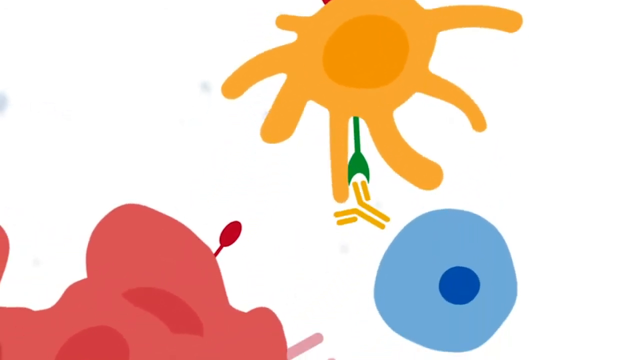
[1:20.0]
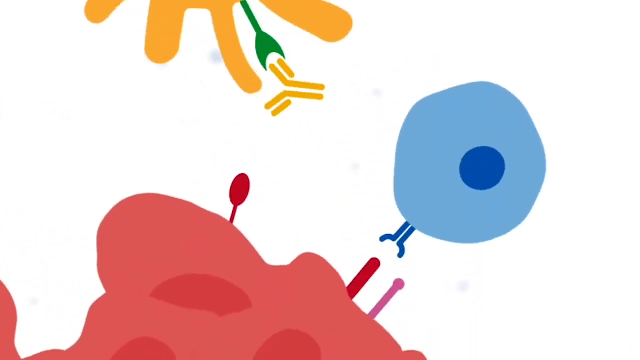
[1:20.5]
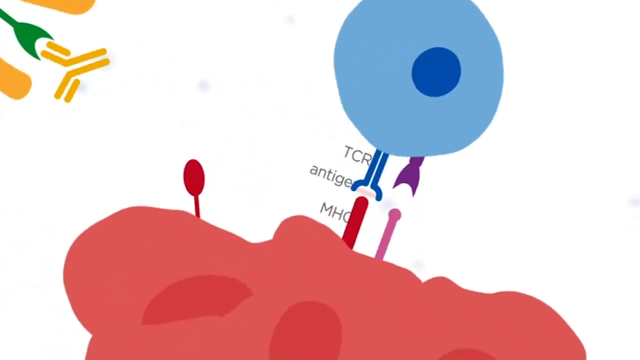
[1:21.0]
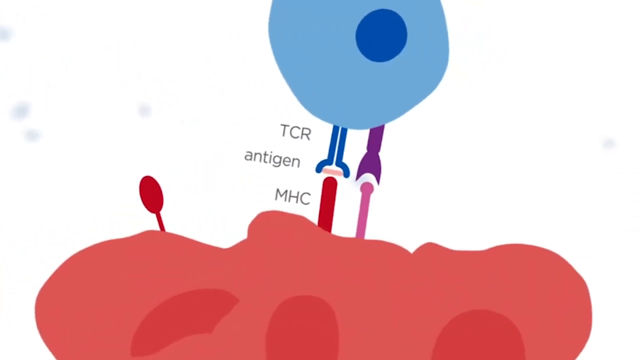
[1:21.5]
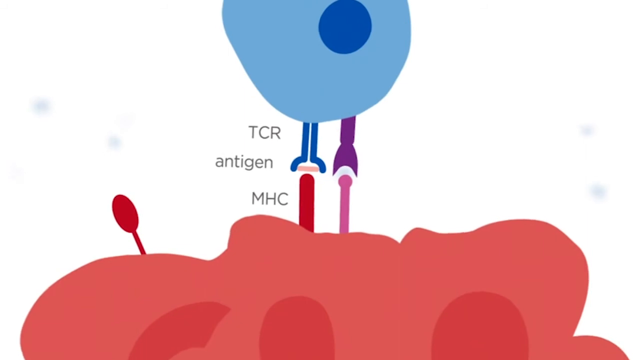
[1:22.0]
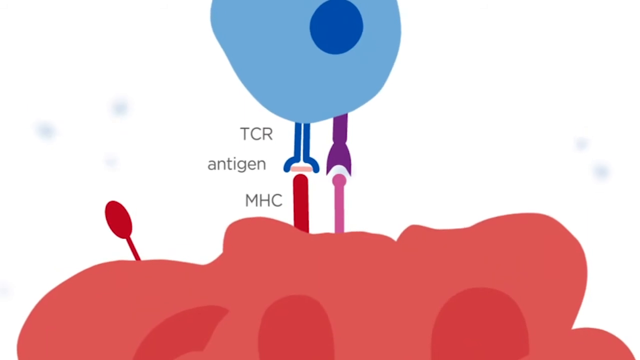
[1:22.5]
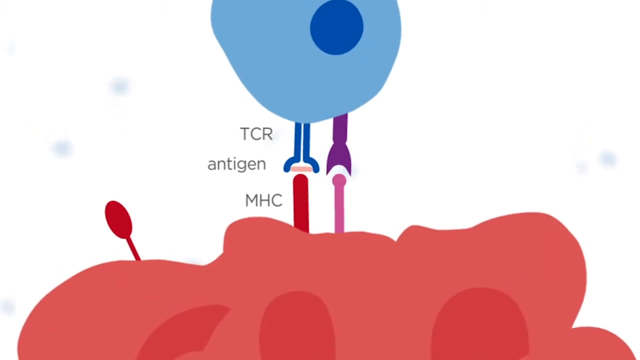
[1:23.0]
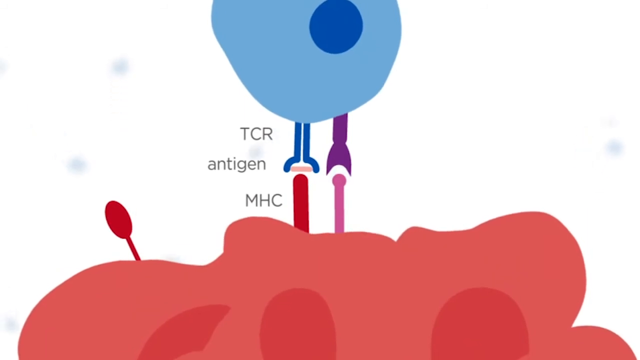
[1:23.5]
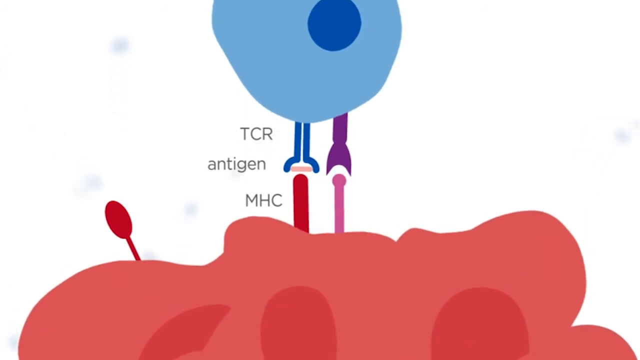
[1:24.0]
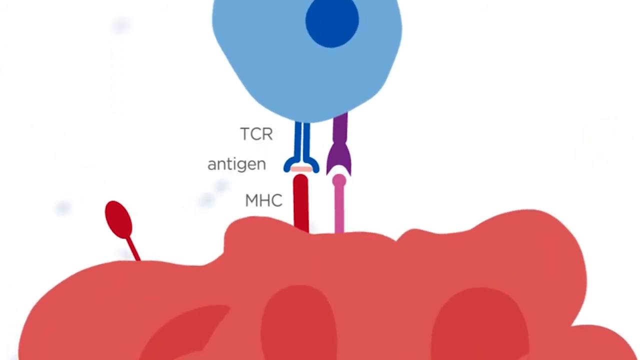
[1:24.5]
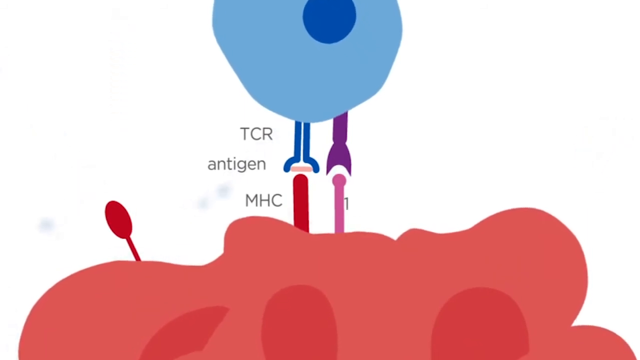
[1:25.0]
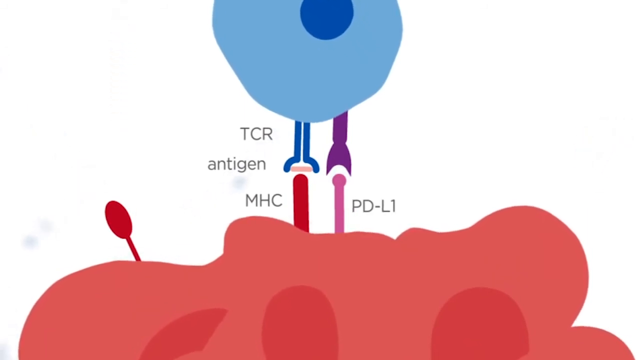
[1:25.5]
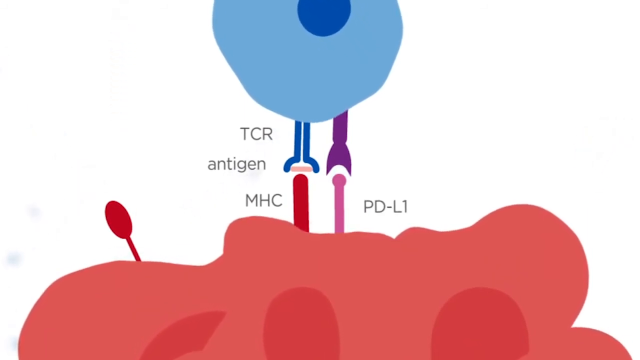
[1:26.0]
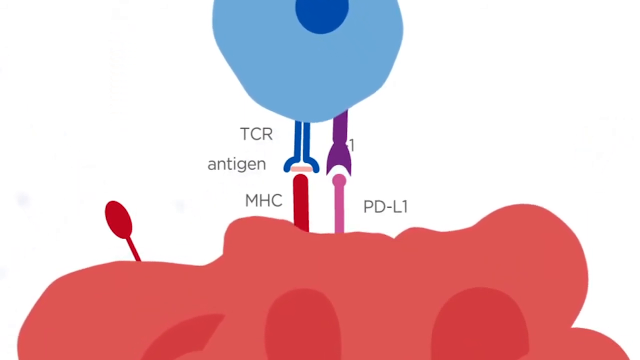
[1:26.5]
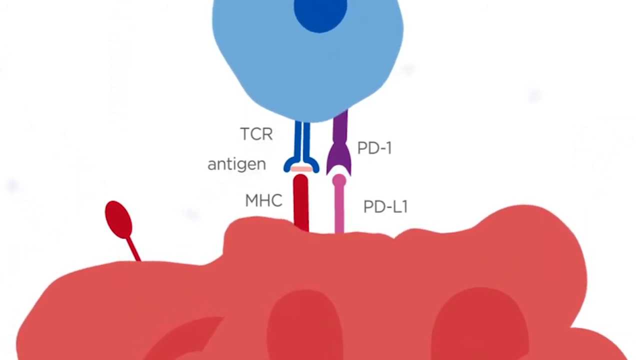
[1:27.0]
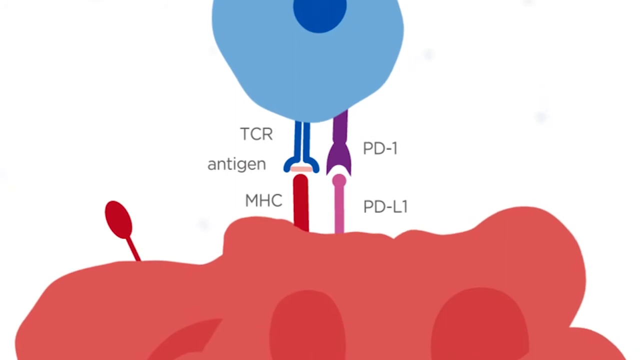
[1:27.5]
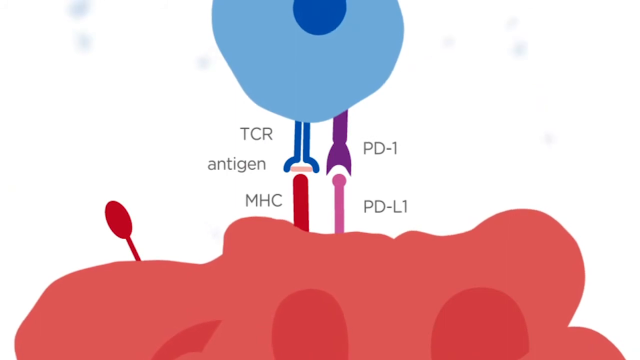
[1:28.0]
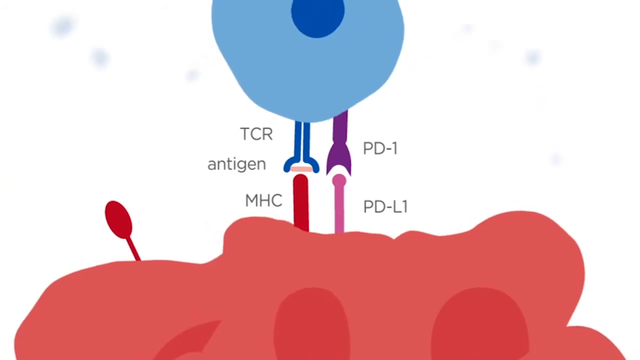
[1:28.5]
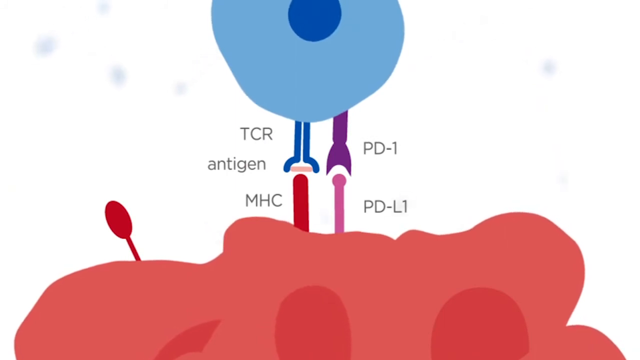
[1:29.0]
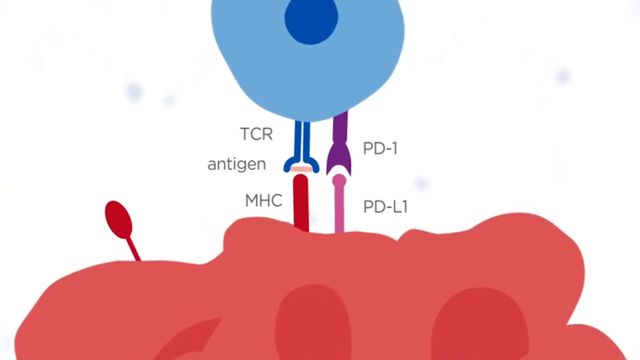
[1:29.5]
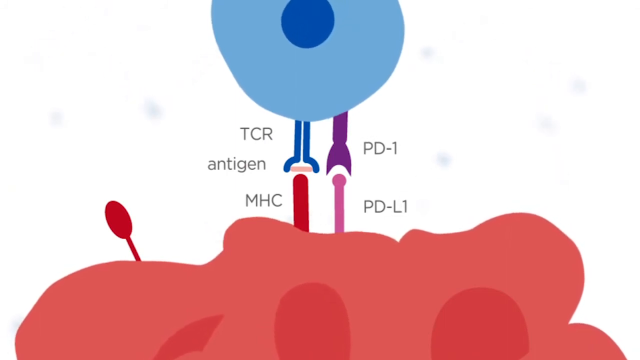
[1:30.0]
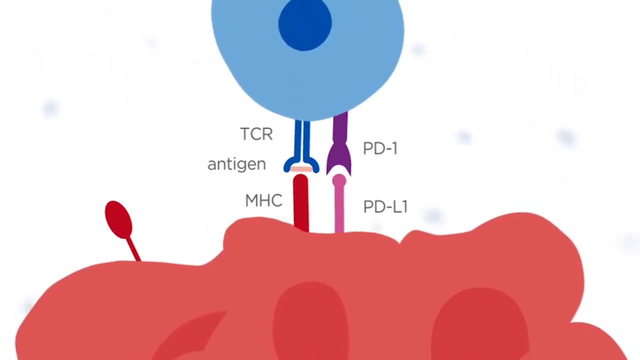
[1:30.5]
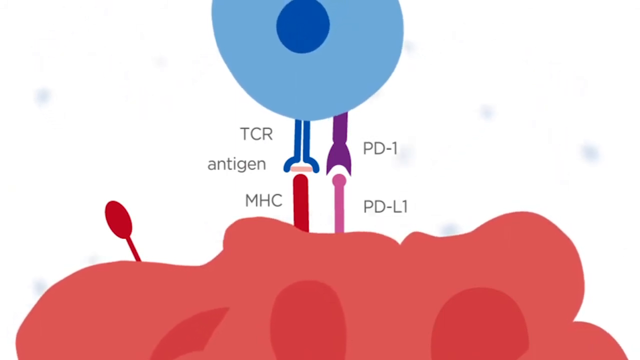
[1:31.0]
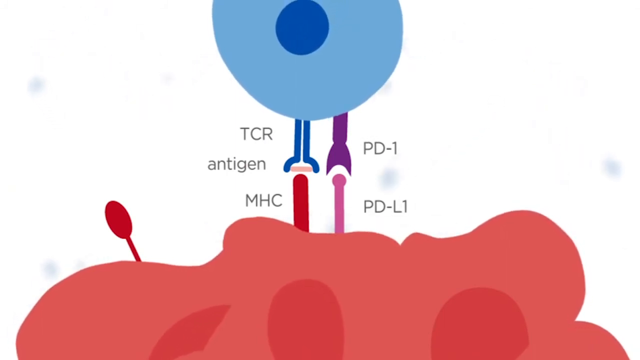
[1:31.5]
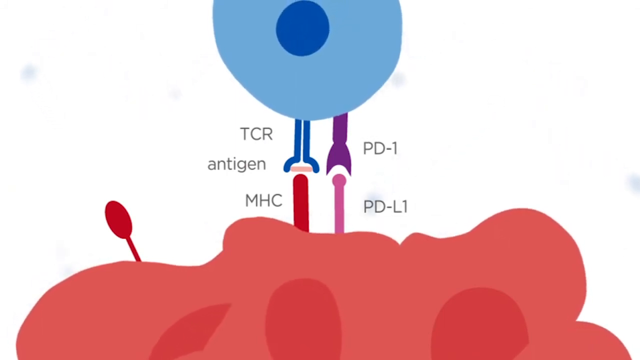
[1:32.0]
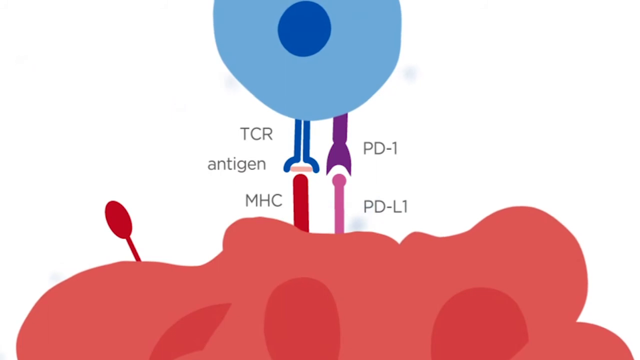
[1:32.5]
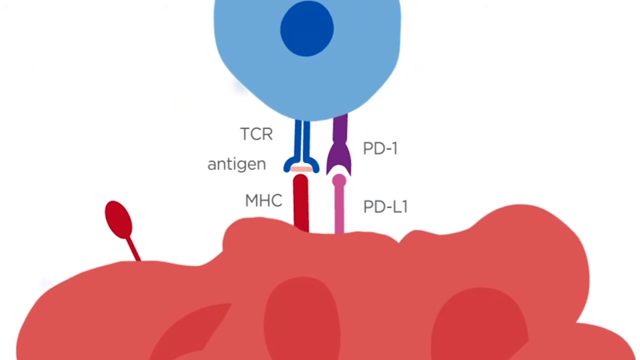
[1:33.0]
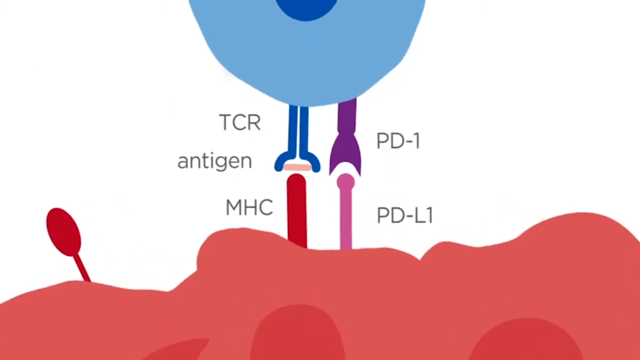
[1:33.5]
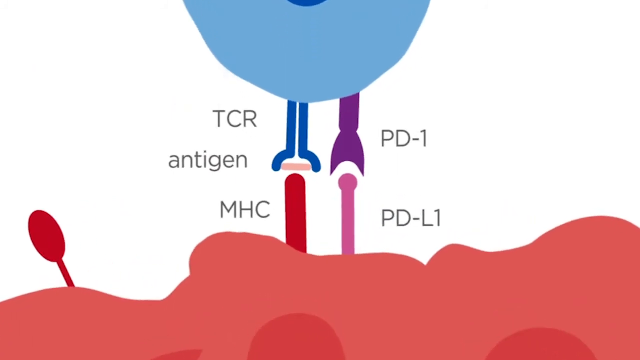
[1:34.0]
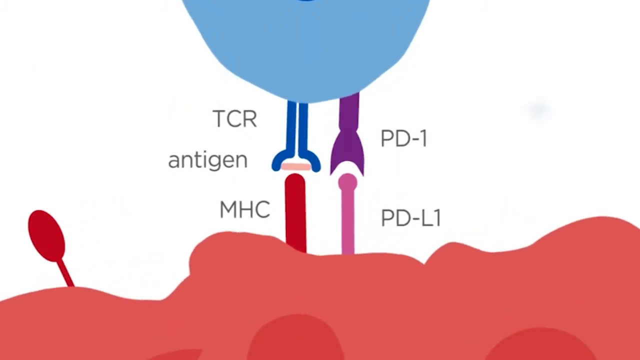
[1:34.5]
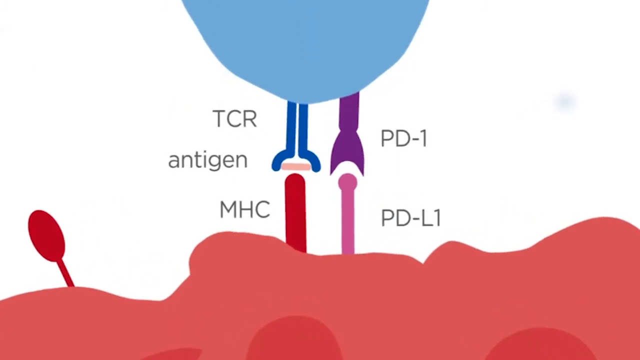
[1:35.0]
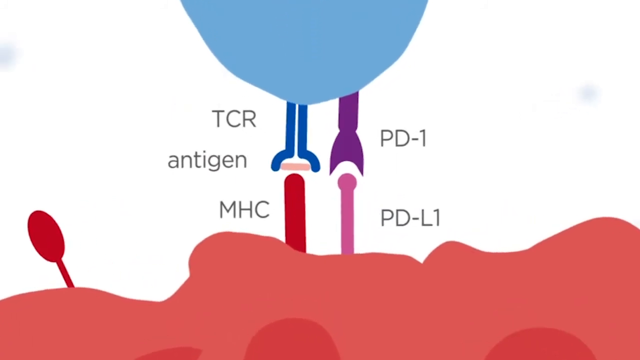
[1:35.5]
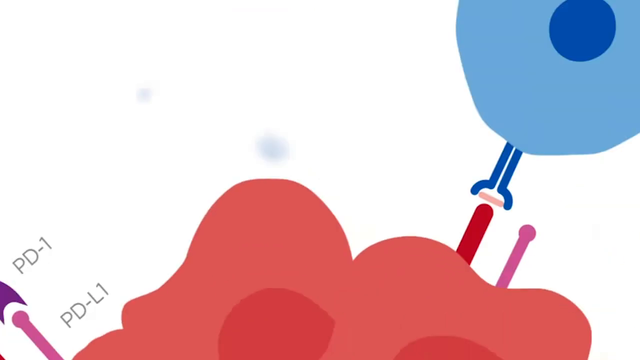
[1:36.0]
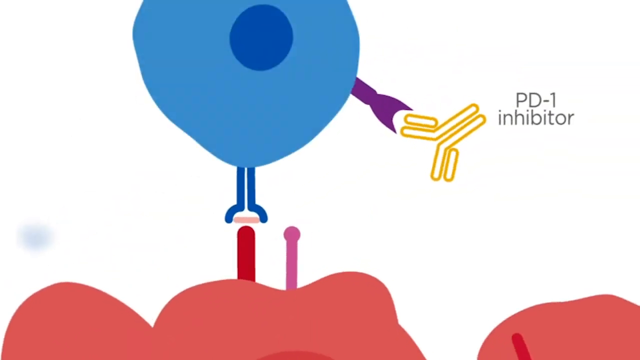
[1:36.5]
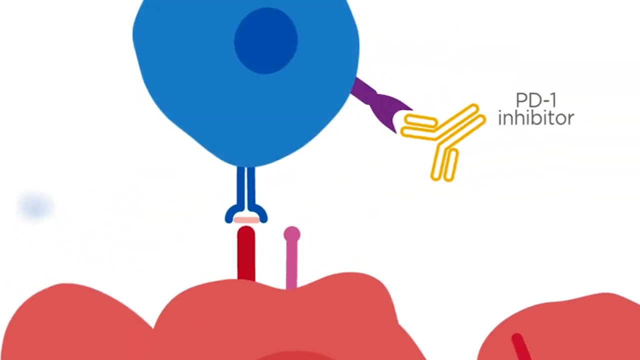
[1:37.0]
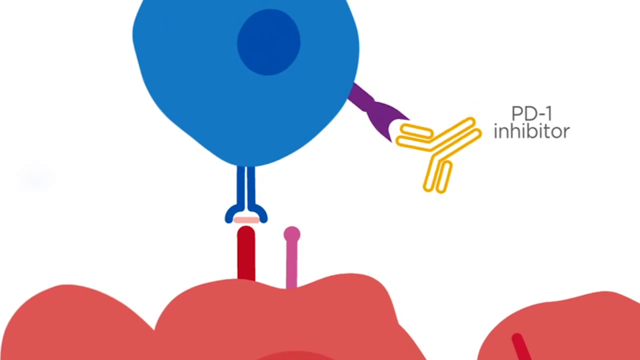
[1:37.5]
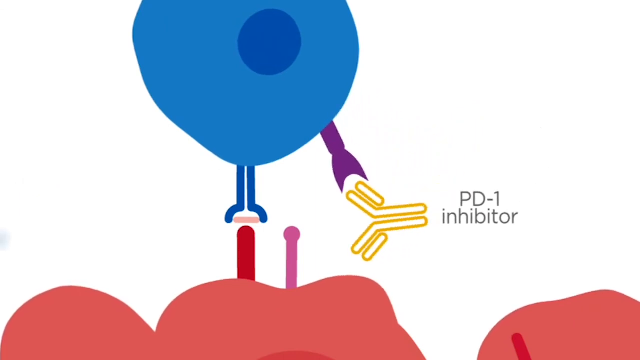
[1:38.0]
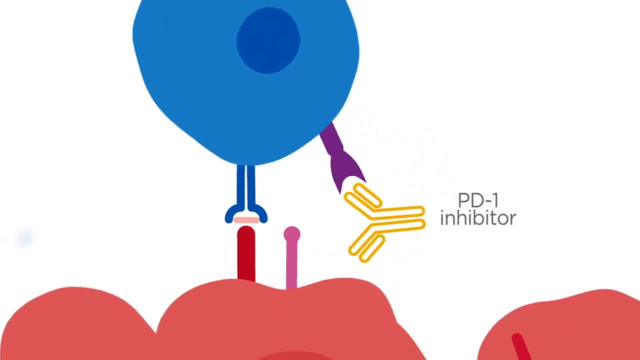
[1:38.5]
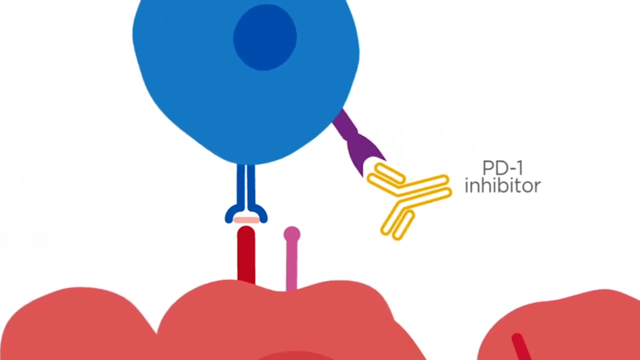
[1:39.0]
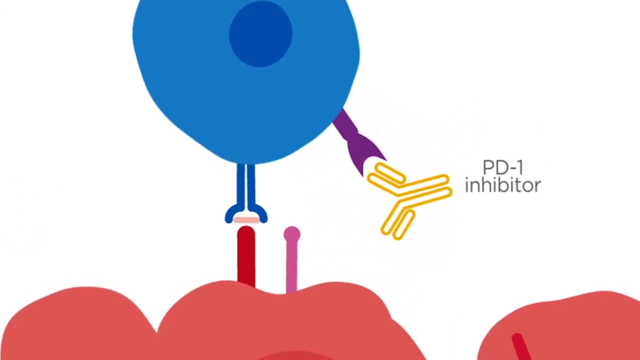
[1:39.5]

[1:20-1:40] Text appears reading "TC antigen MHC PD1 PDL1". Two things are shown: the tumor and other protein elements from the blood, which apparently fight against the tumor.